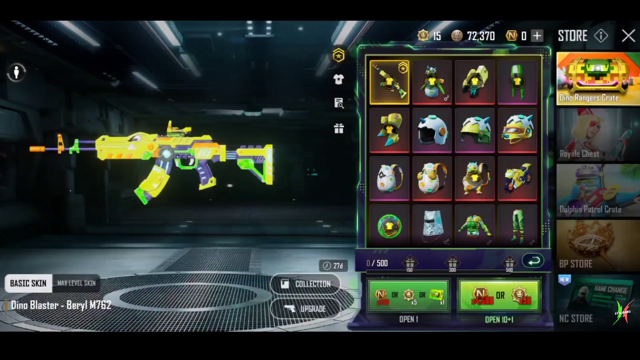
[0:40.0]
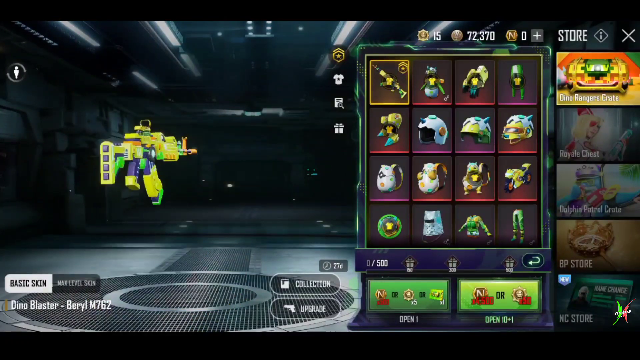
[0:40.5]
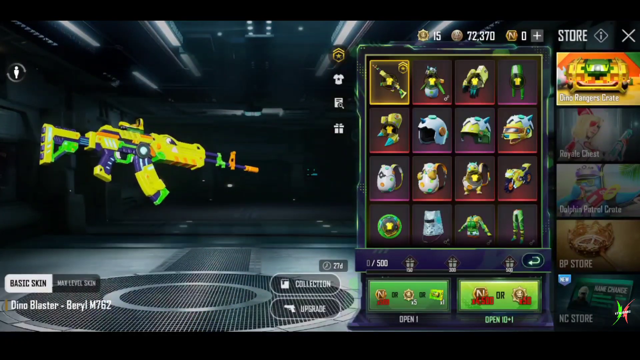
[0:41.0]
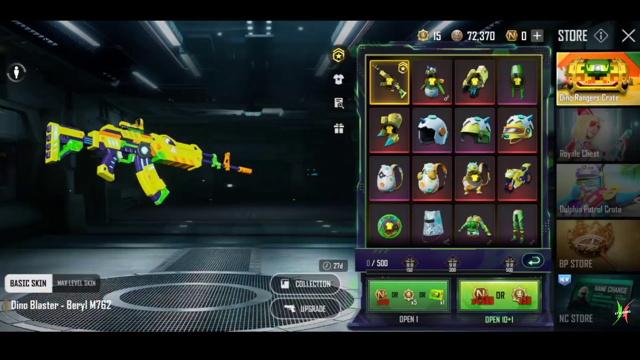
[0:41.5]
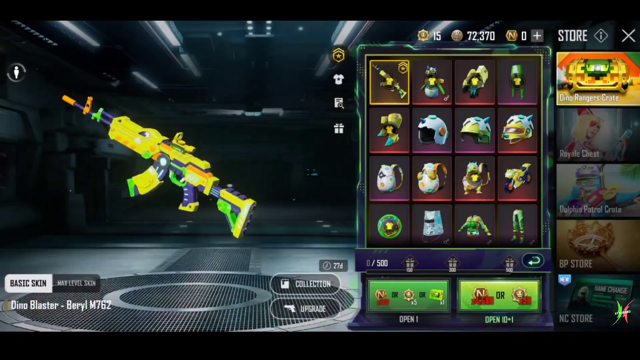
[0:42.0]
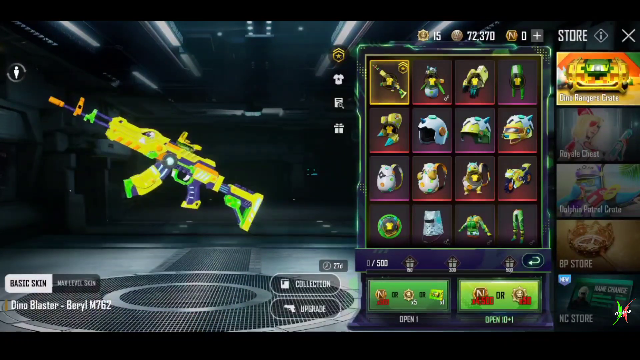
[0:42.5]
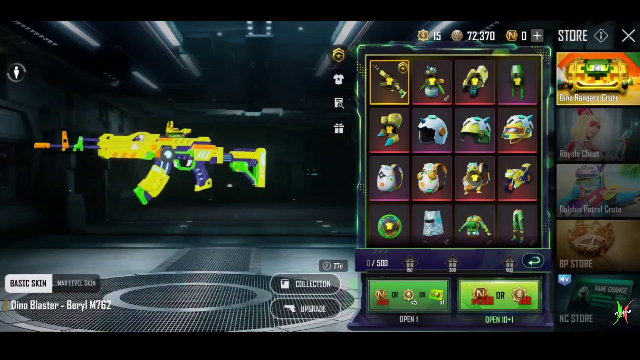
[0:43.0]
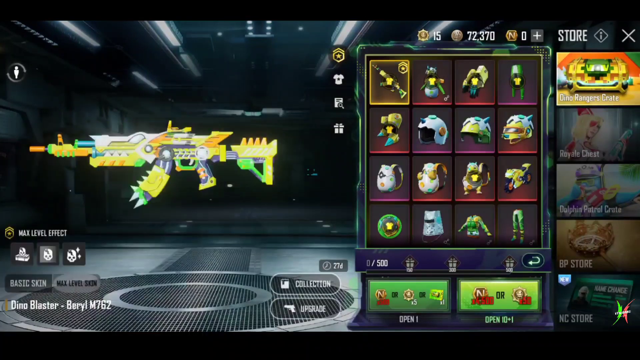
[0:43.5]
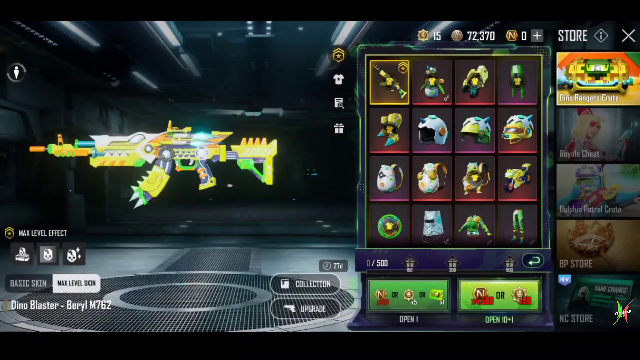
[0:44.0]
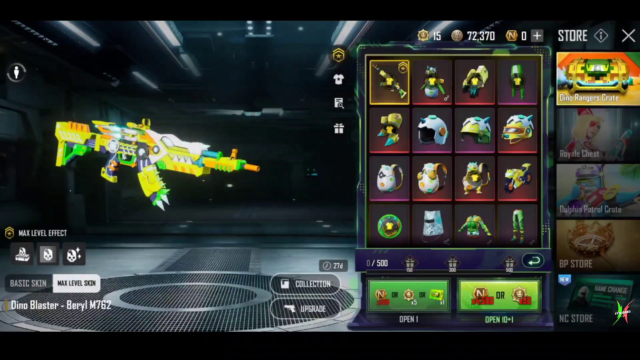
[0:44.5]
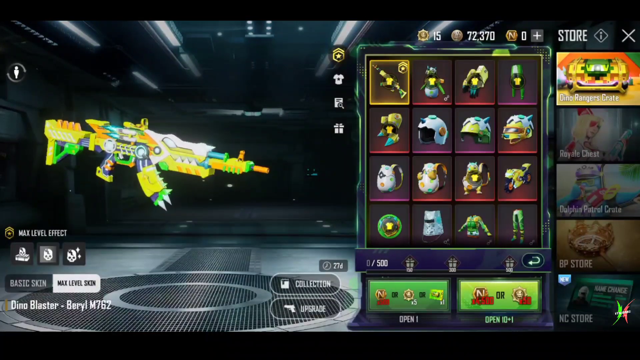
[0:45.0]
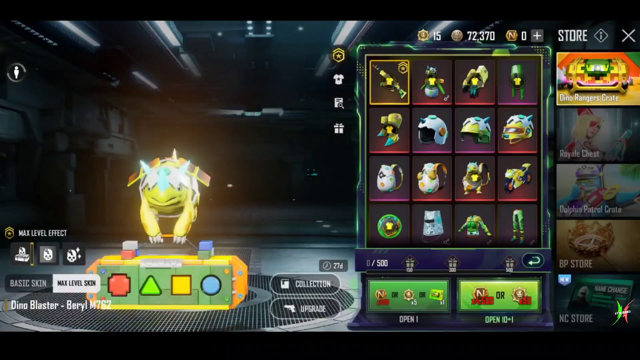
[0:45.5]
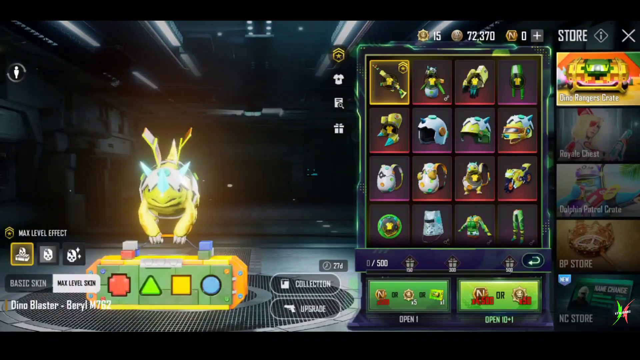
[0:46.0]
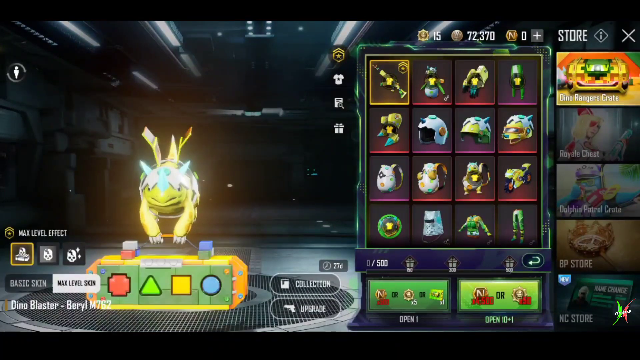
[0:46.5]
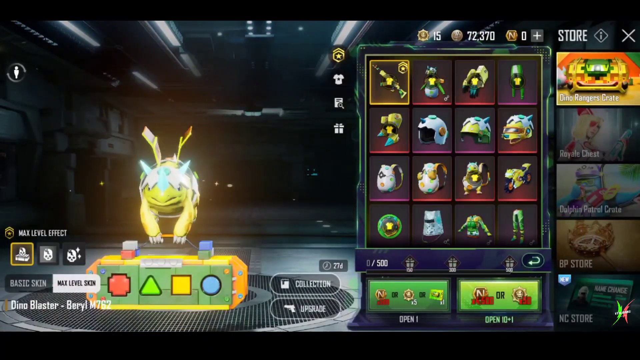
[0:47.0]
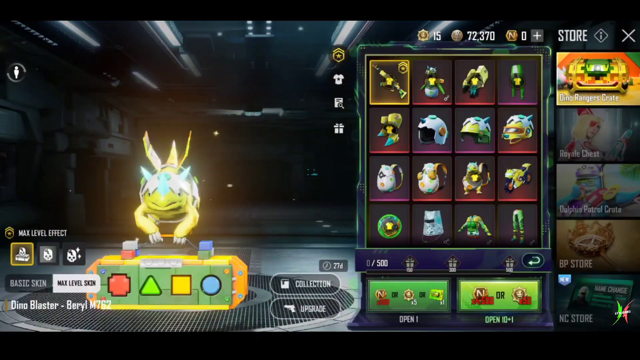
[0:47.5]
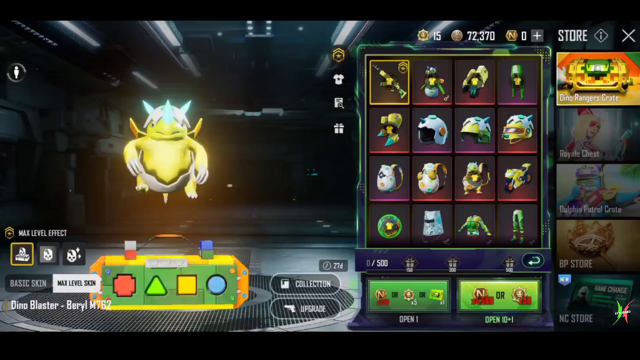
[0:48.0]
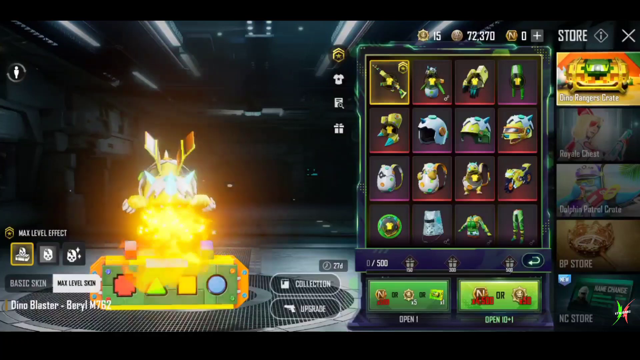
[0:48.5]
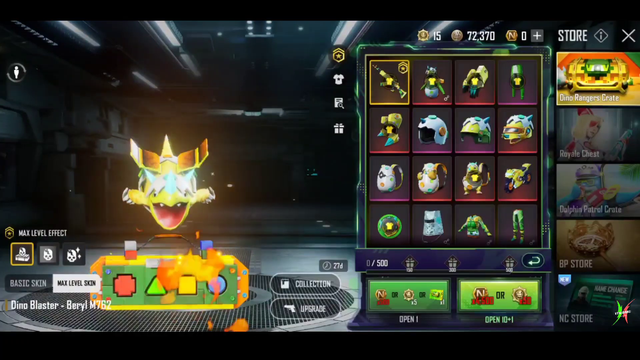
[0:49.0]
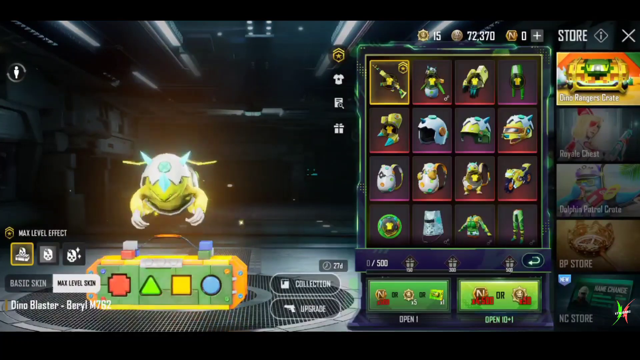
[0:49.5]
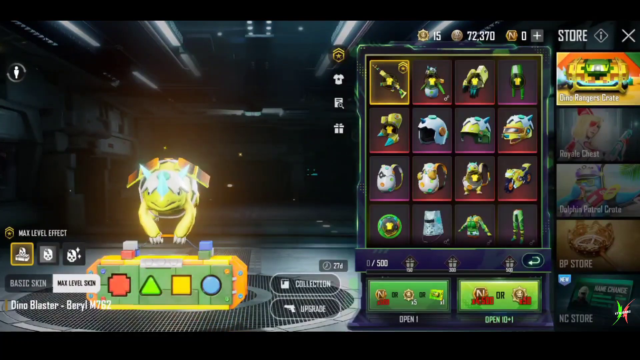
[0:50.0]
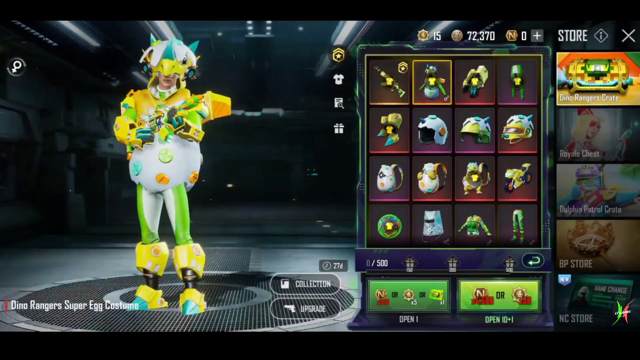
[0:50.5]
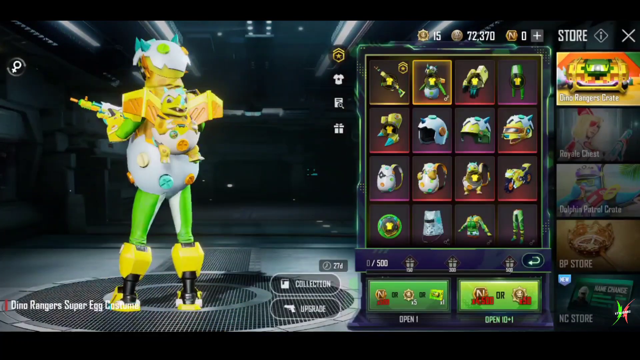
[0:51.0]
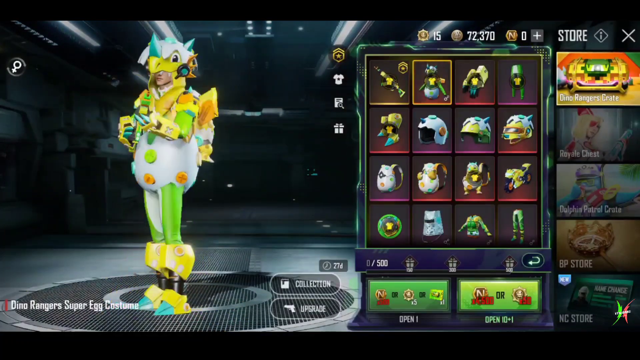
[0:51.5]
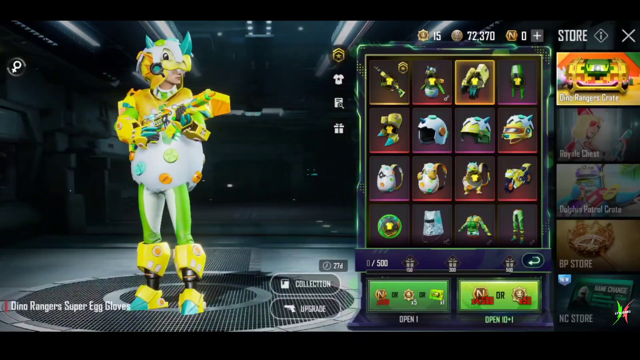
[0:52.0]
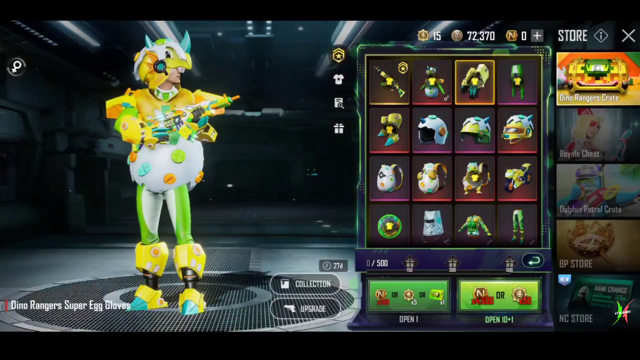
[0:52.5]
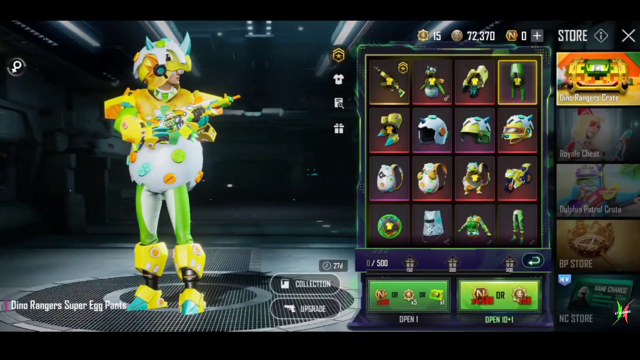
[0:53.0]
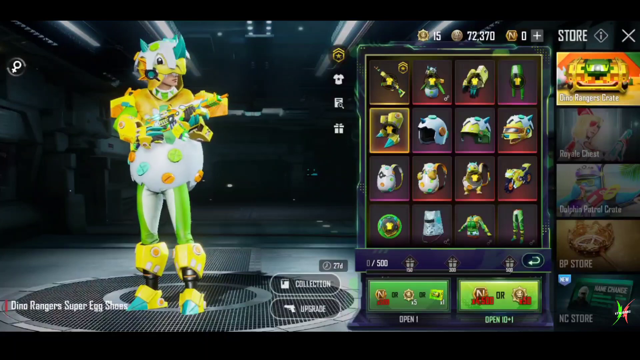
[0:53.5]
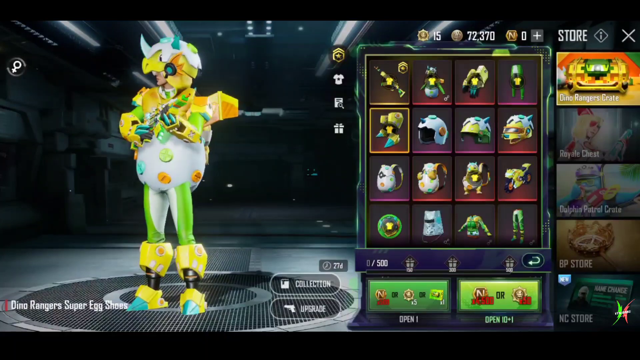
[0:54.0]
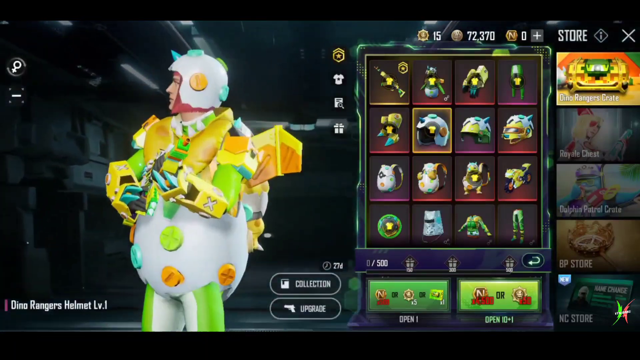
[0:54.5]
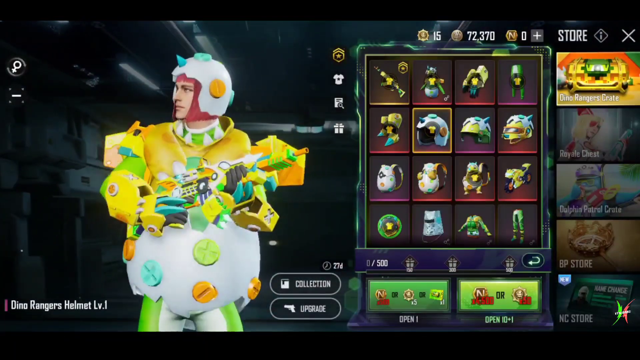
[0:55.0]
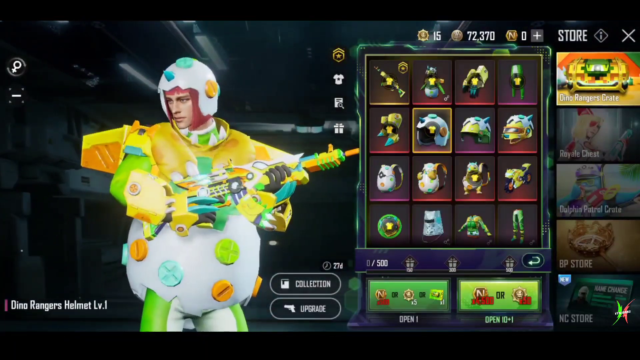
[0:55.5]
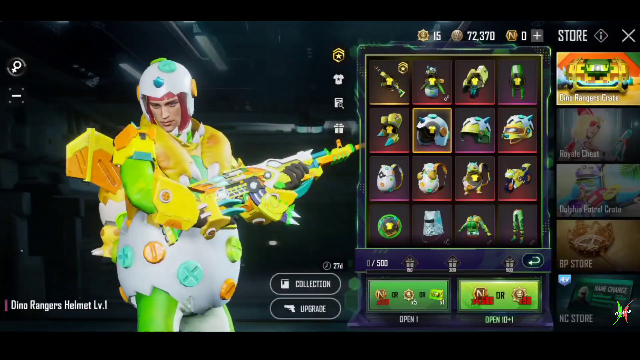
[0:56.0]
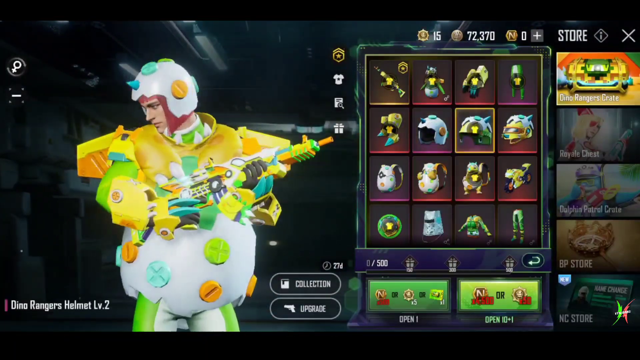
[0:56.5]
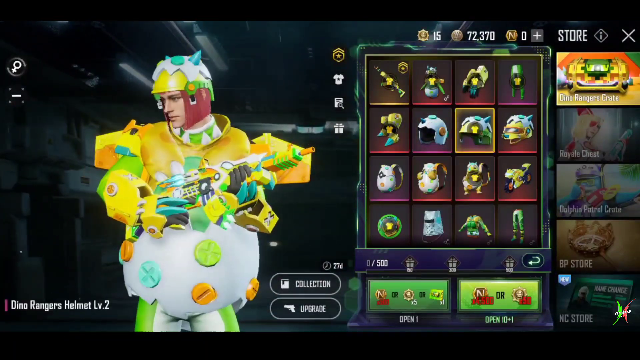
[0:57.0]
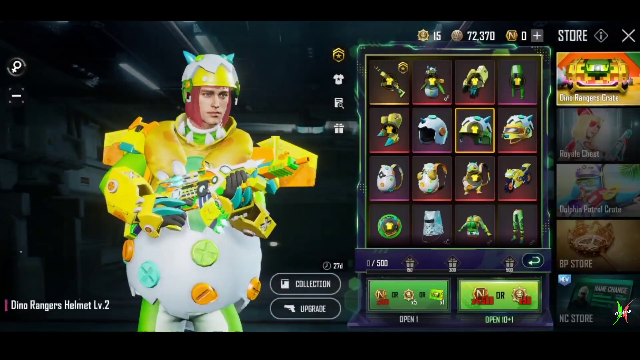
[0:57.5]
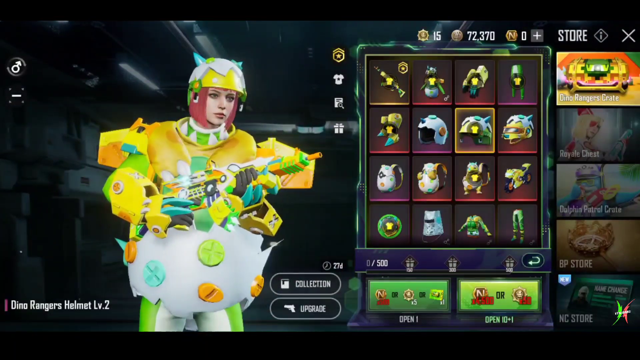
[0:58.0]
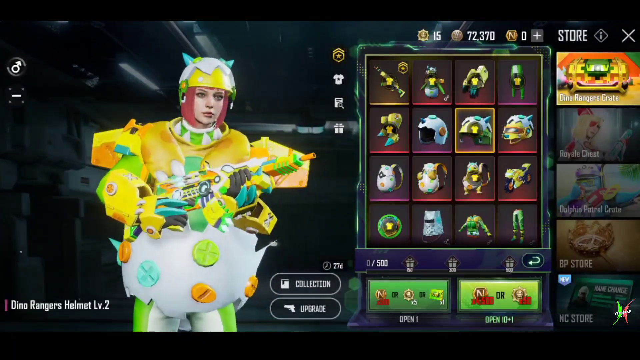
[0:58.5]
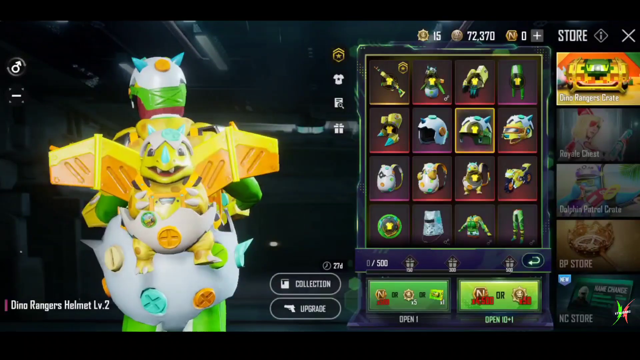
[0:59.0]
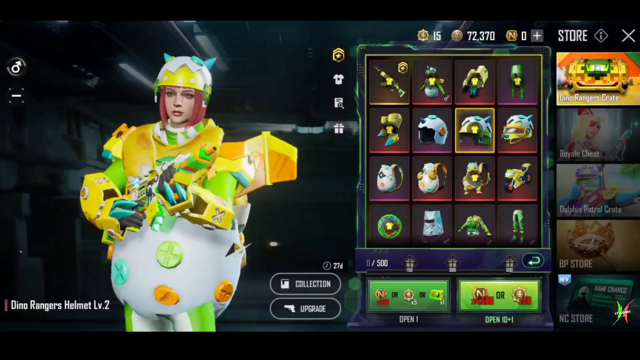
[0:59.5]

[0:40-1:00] The view stays on the gun in the Dino Rangers crate; the gun looks like a miniature dinosaur, with its face toward the middle of the weapon and a purple eye. On the far right of the crate, 12 different items are displayed. In the first row are the gun at the top left, a dinosaur bodysuit and gloves in a red aura square, and green pants in a purple square. The second row has boots in a red square, two helmets in purple squares, and on the right what appears to be almost a dinosaur cat-like helmet, also red. The third row has other cosmetics: a purple crate with an egg; a replica of it showing a dinosaur's head cracking the egg, in red; the baby dragon, now with its feet, with the egg hatched; and a motorcycle with a dinosaur head. Below these are four more cosmetics, such as helmets and body plates, in a lighter purple.